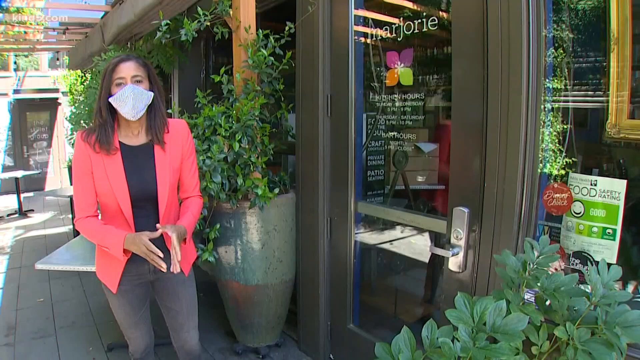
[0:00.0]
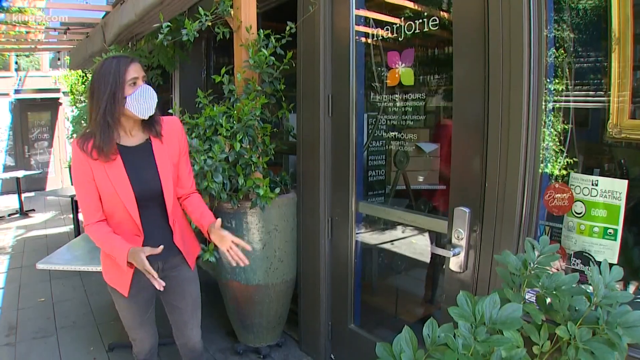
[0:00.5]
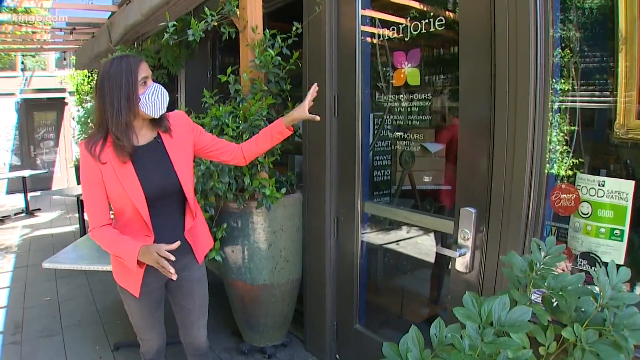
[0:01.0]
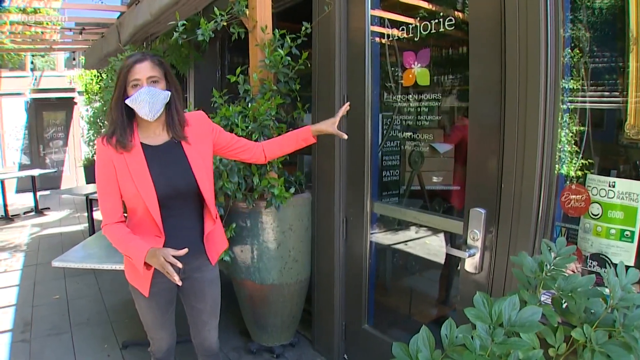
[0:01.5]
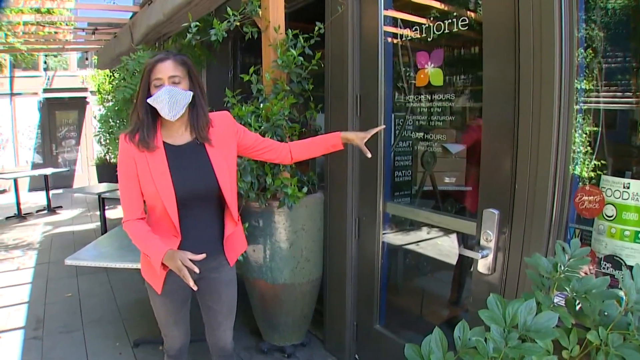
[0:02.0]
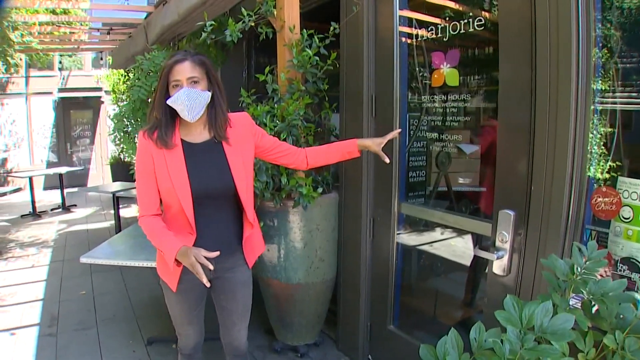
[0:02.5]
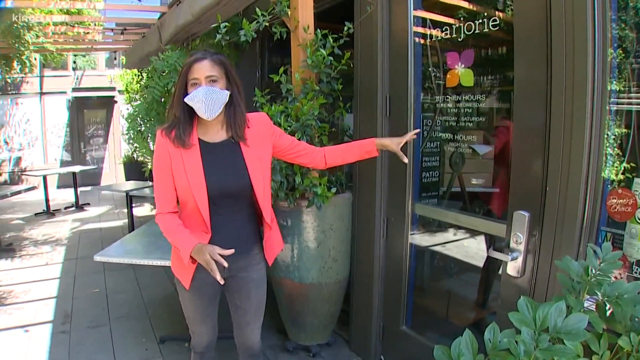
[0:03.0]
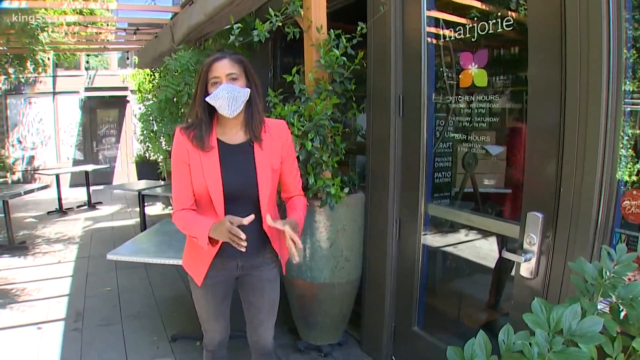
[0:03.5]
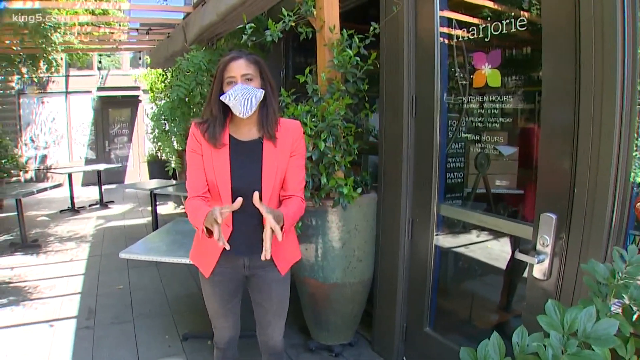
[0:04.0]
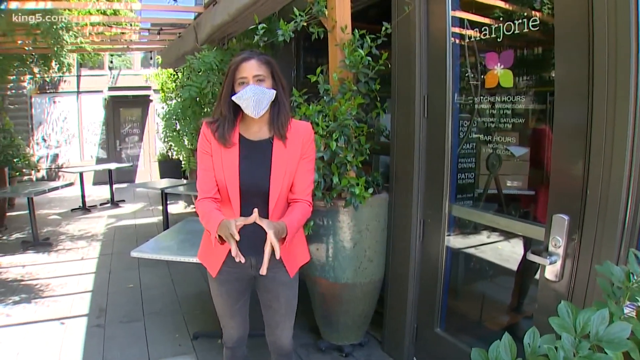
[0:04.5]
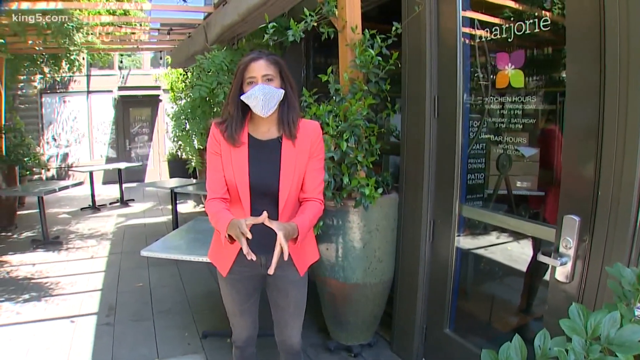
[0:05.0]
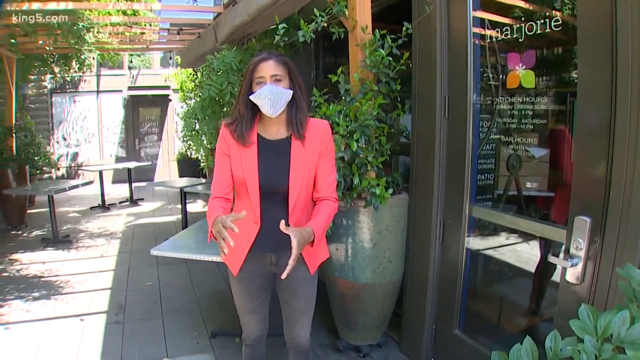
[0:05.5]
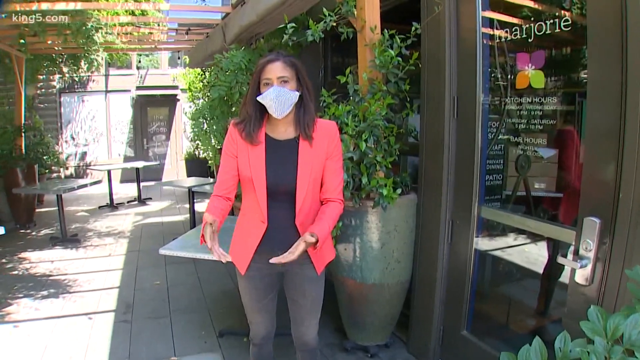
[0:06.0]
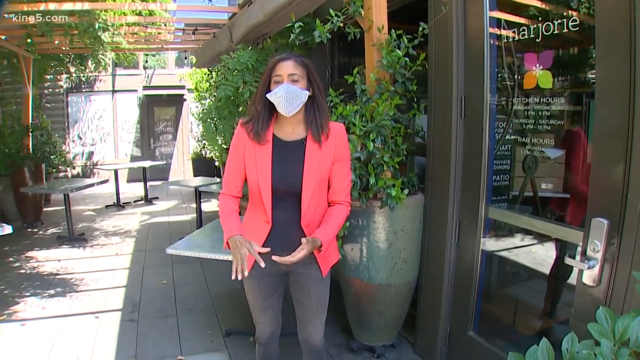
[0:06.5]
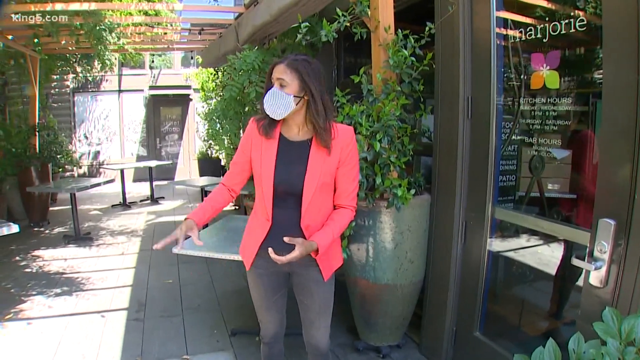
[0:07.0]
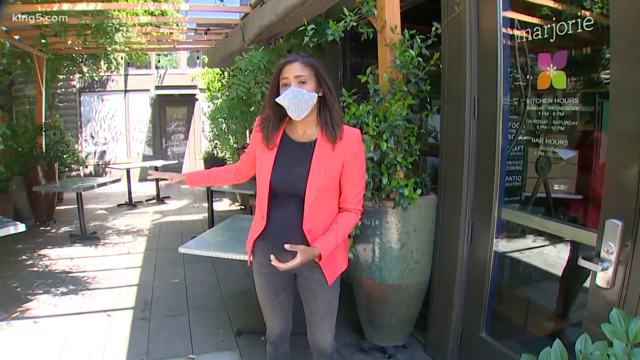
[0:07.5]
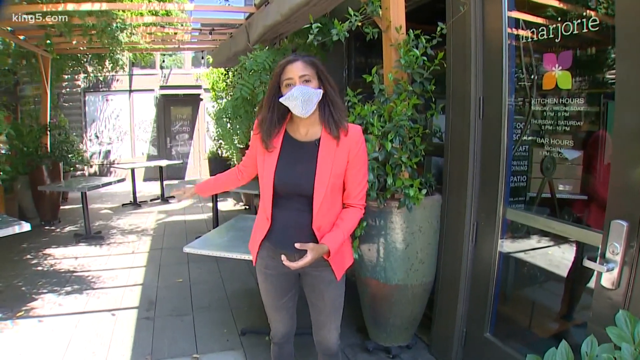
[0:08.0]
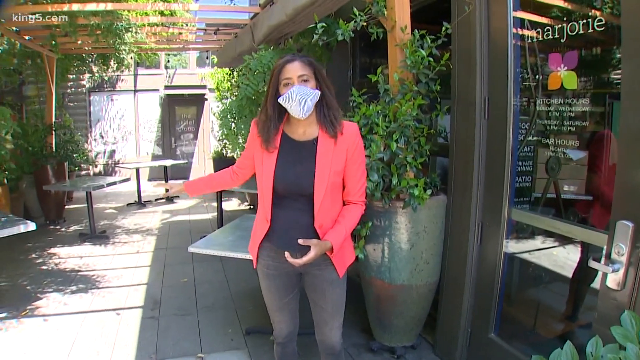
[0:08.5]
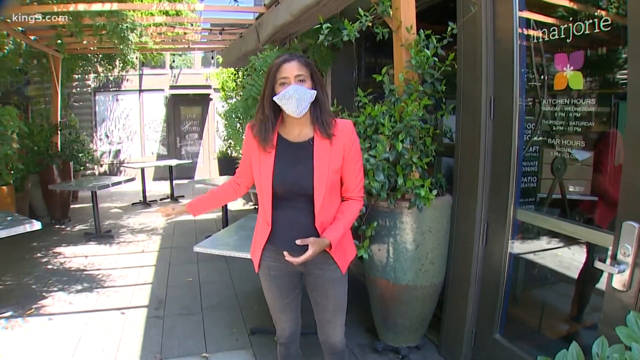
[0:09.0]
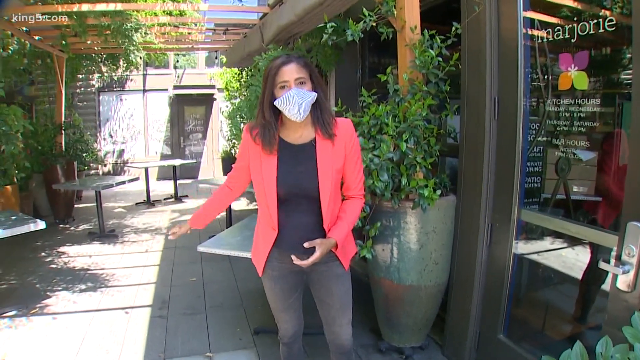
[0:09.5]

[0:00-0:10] A woman wearing a mask like a surgical COVID mask and a salmon-colored jacket stands outside a little shop called Marjorie. There are plants in heavy planters and a covered patio. The store appears to have home goods, garden items and possibly some crafts. The woman may be a news reporter, or possibly someone with a YouTube channel.